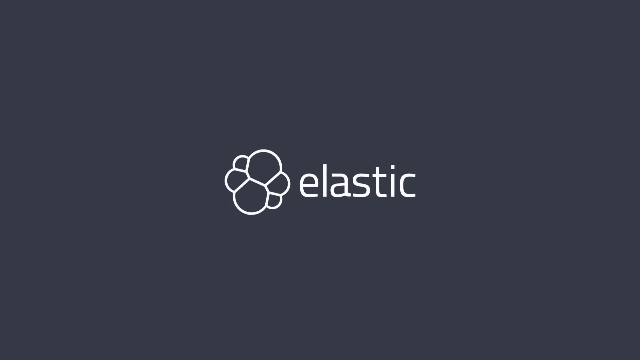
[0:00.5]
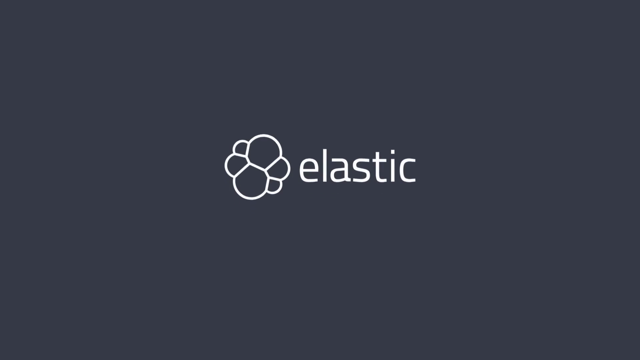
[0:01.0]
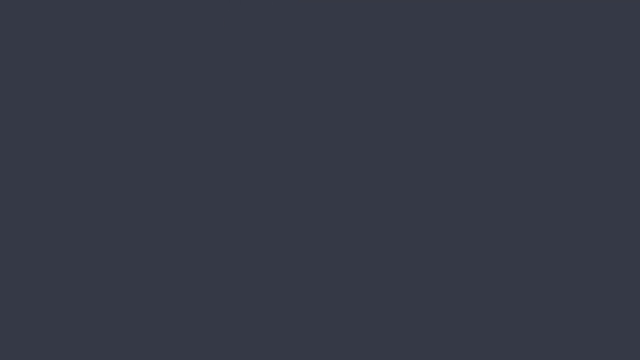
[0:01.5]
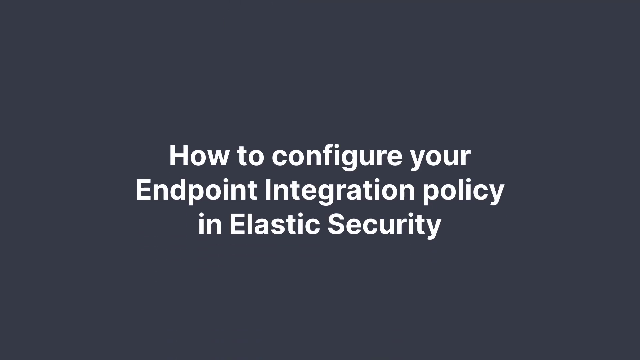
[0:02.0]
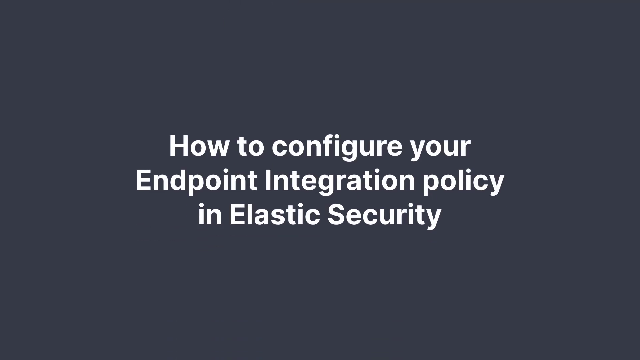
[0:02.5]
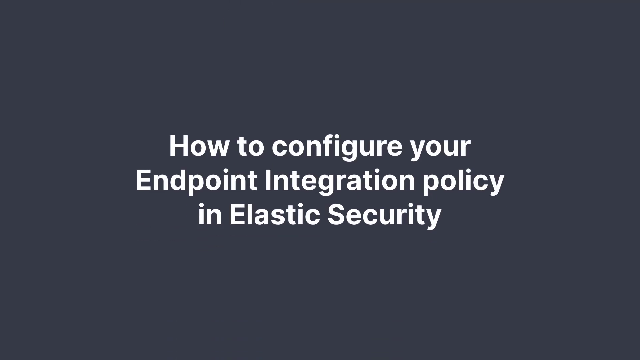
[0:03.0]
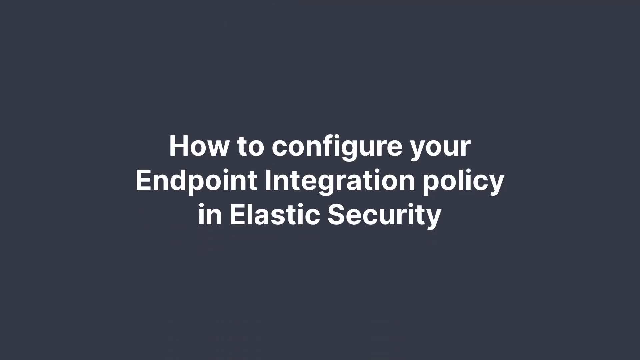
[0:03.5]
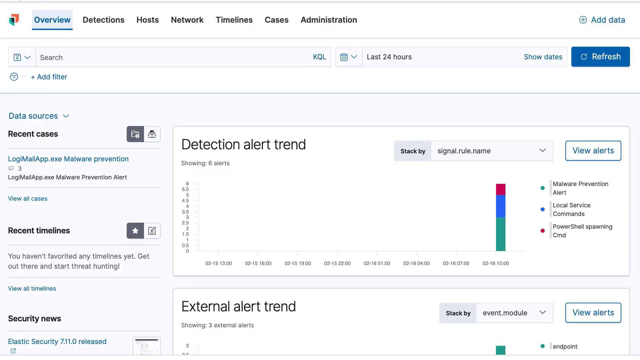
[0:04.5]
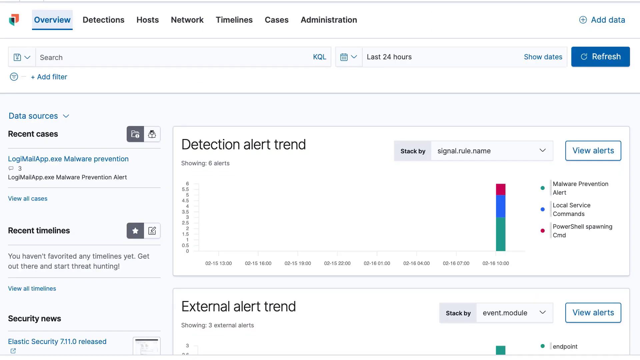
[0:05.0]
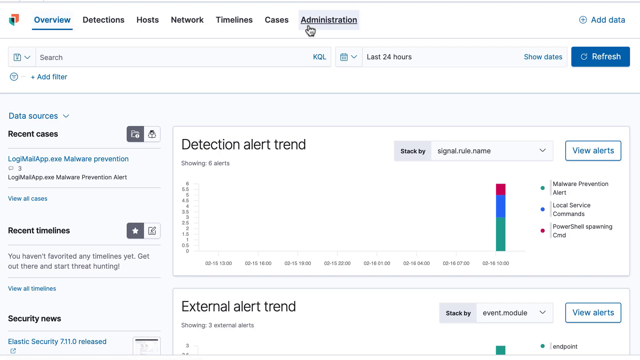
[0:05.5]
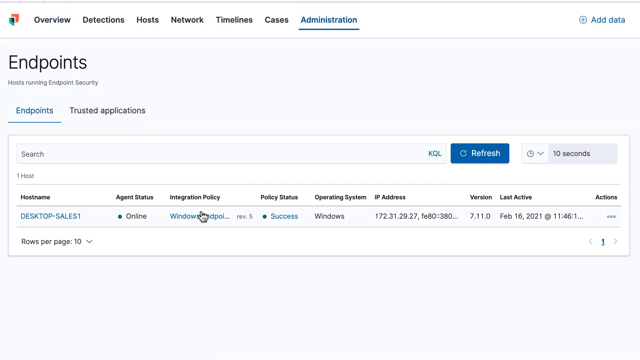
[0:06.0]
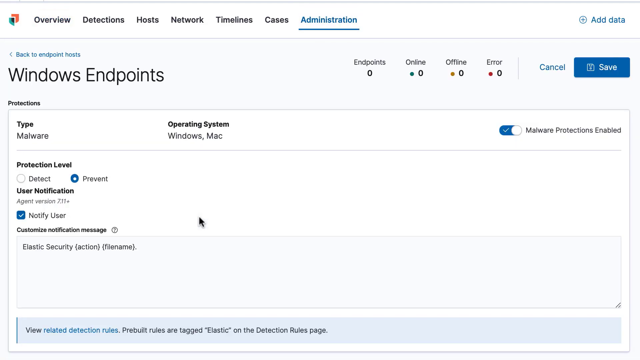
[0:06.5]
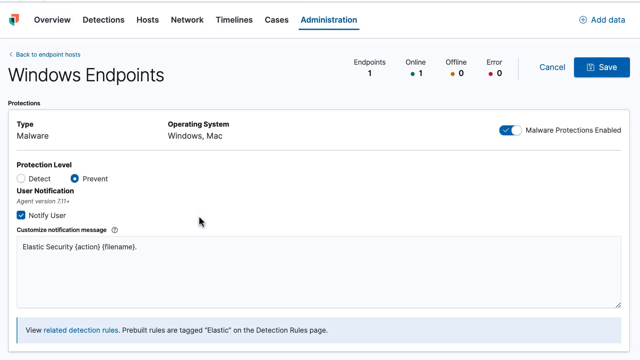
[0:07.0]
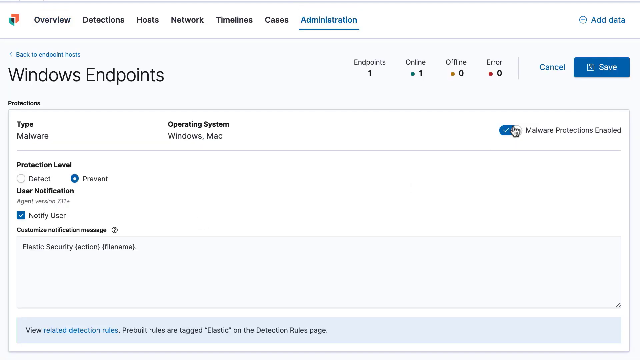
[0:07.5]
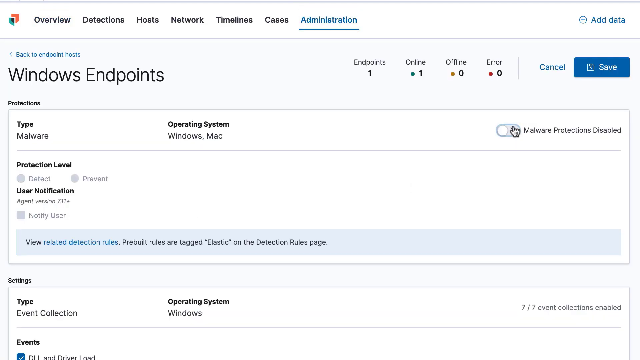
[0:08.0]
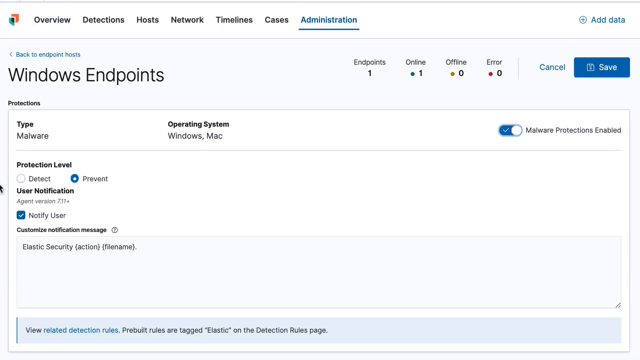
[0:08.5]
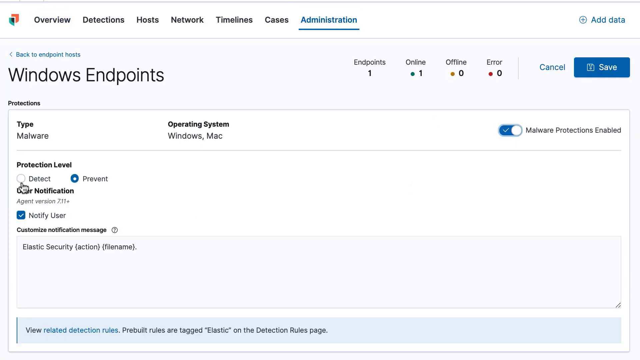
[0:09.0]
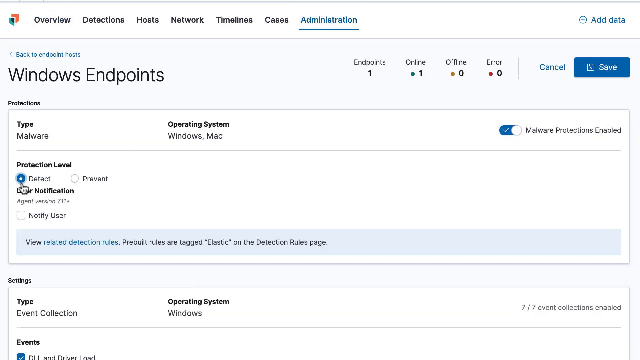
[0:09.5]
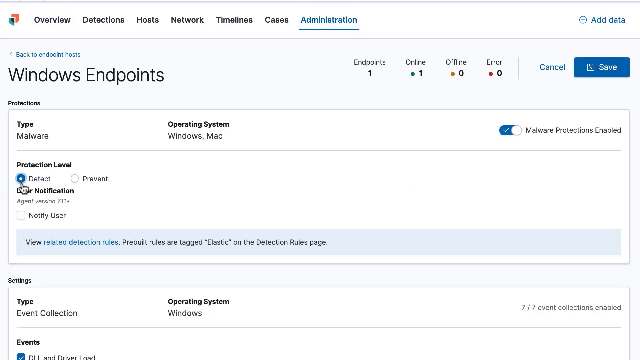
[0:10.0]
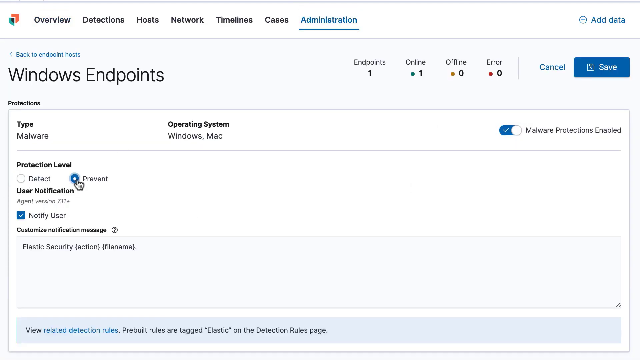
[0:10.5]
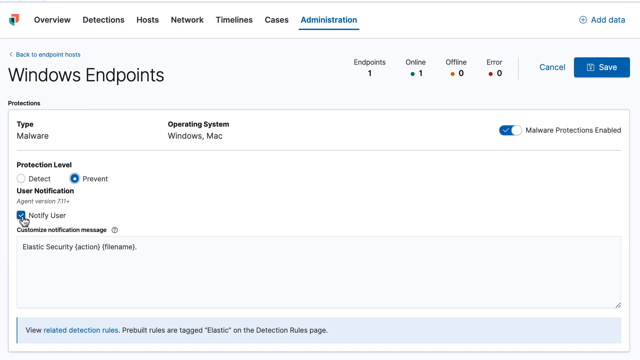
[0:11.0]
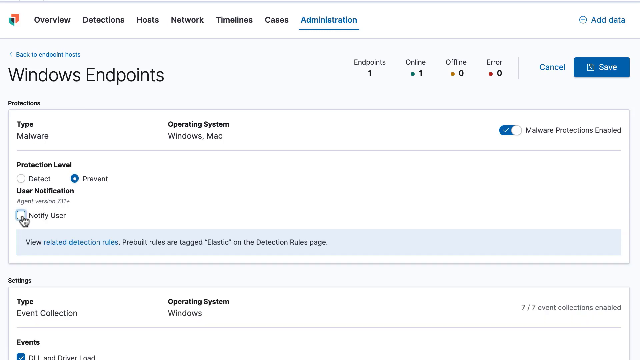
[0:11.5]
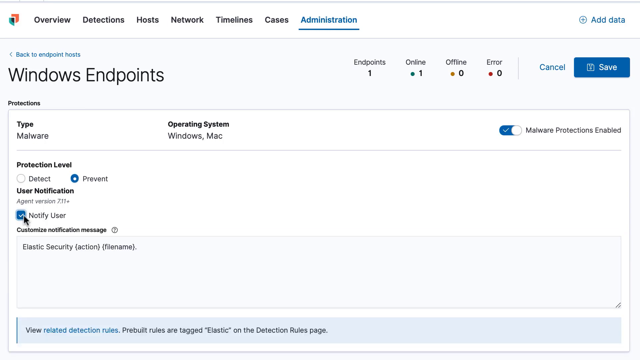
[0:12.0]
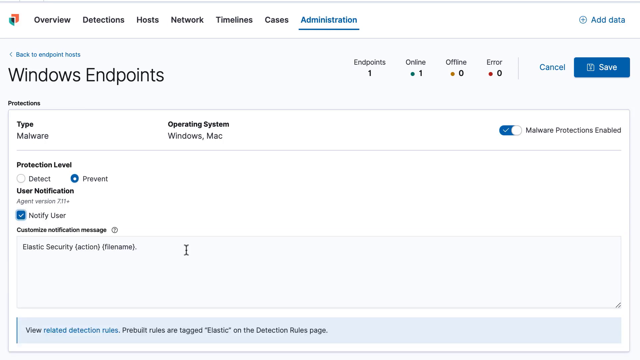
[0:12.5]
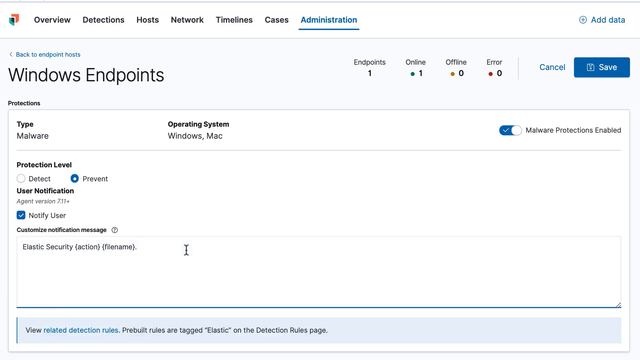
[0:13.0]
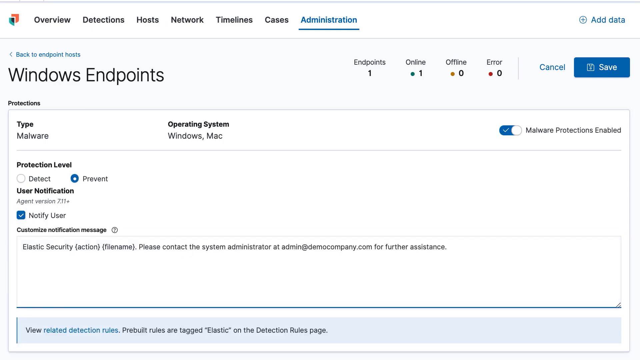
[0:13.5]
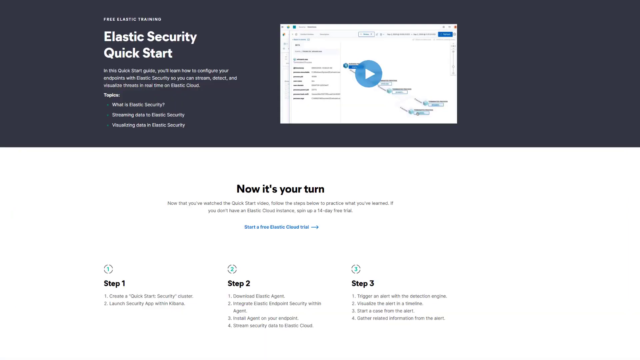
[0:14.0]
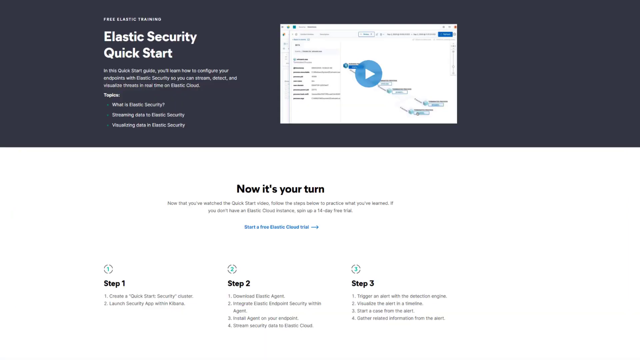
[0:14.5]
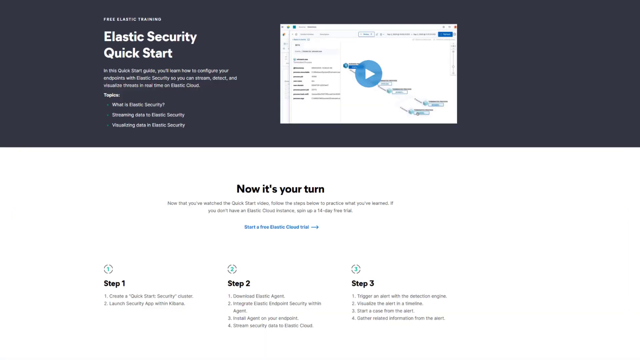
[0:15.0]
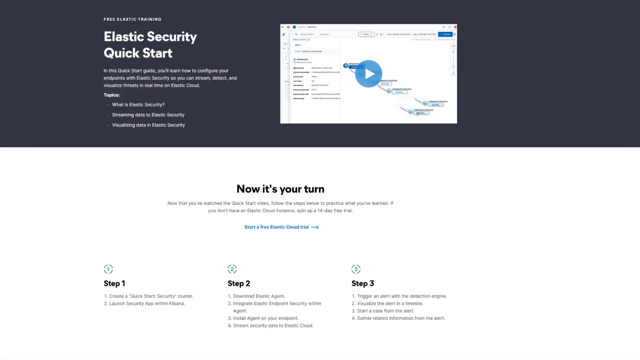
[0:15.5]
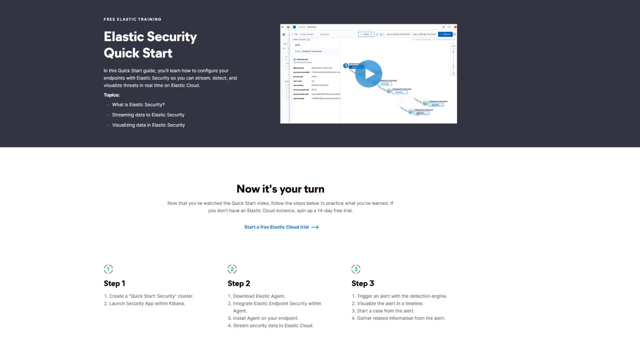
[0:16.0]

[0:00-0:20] The video is about Windows Export and Elastic Security Quick Start, showing the different configurations that can be made. On a black screen, the word "elastics" appears with a symbol beside it made of semicircles put together: on the right, a larger semicircle on top and a smaller one on the bottom; on the left, a small semicircle on top and a larger one on the bottom. These are white. Text scrolls up reading "how to configure your endpoint integration policy in Elastic Security". The view then flips to a computer screen showing "cases" and "administration". To the right, "add data" appears with a little plus symbol. The area reading "administration" is highlighted. Further down is the word "endpoint", and below that, "endpoint trusted applications".